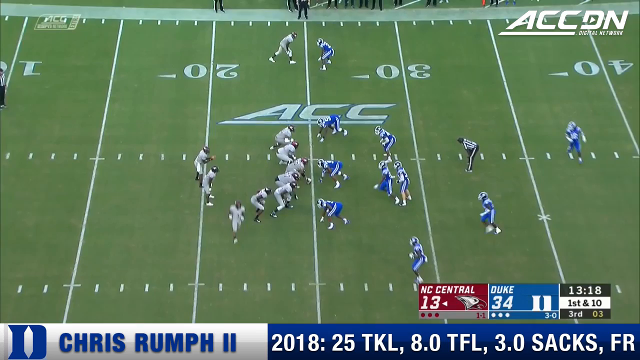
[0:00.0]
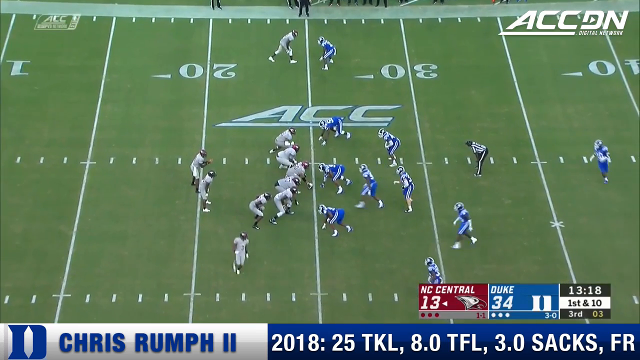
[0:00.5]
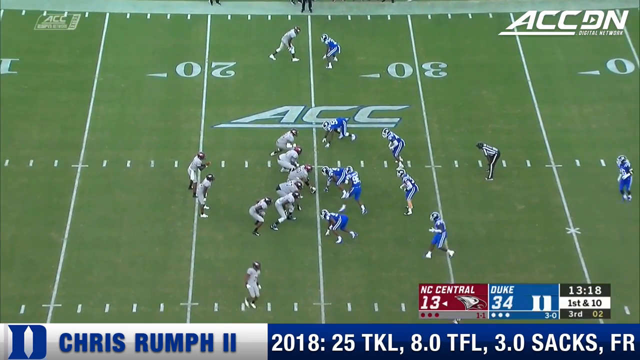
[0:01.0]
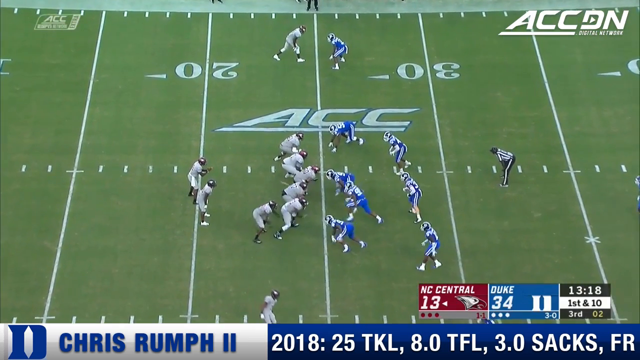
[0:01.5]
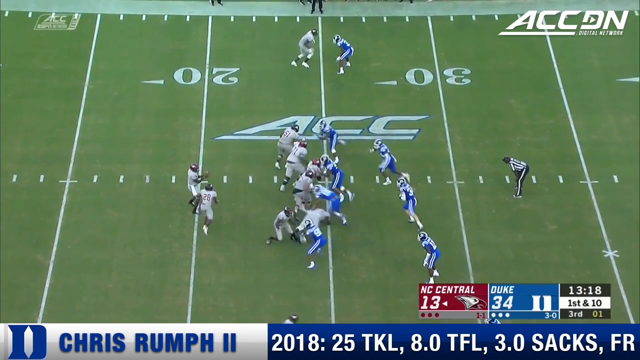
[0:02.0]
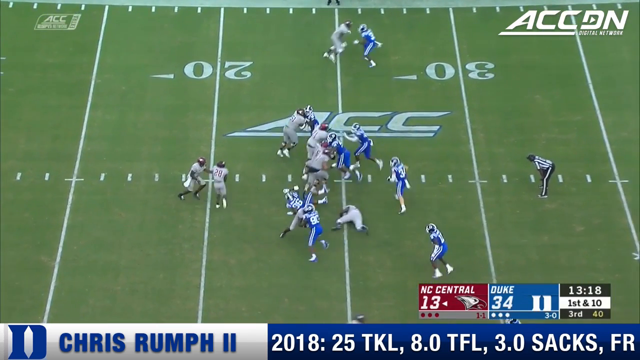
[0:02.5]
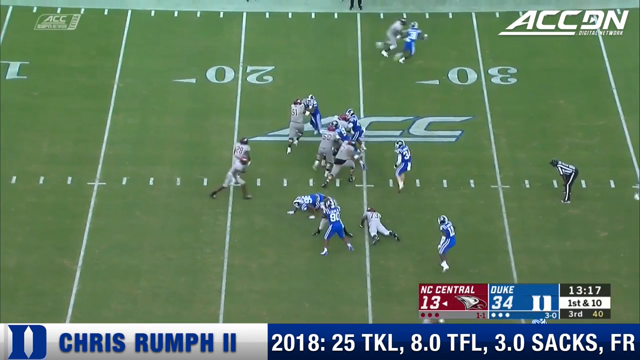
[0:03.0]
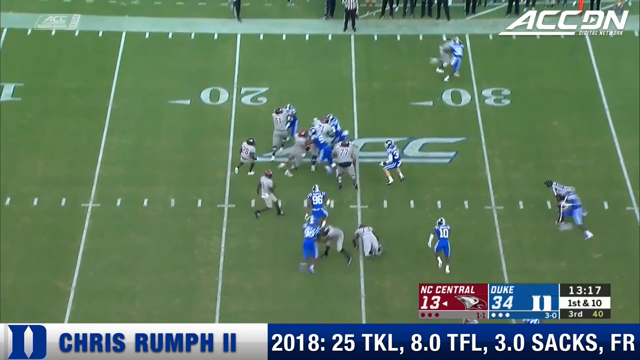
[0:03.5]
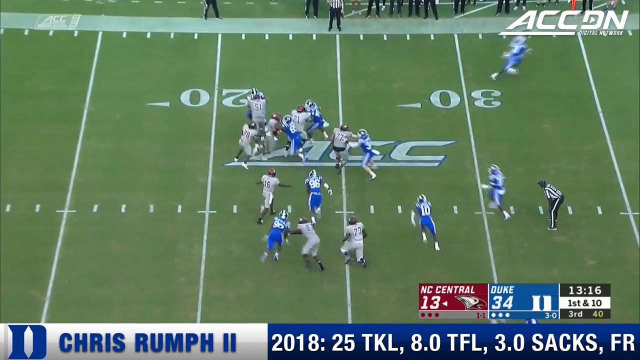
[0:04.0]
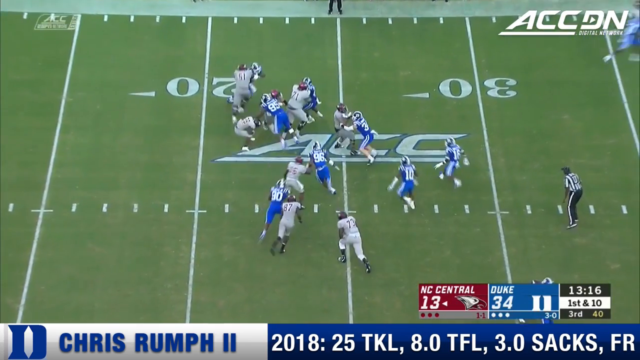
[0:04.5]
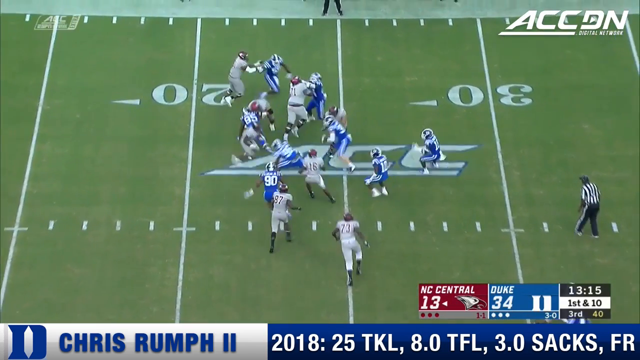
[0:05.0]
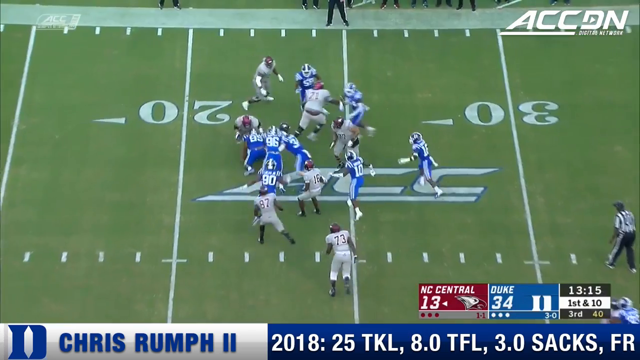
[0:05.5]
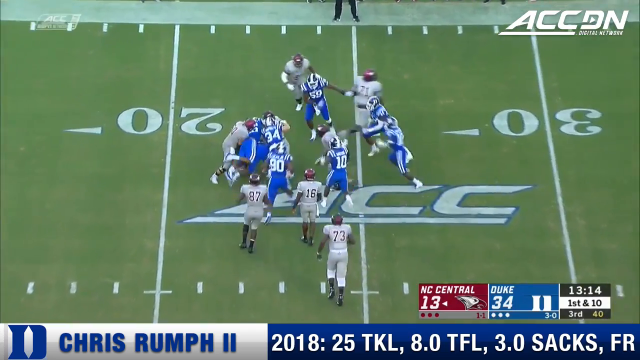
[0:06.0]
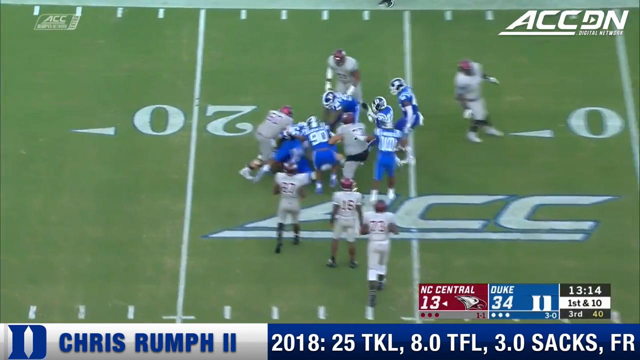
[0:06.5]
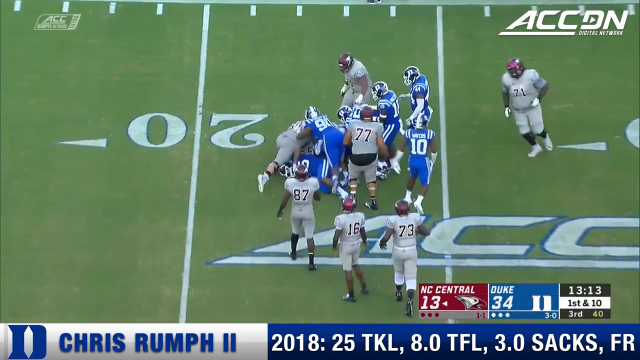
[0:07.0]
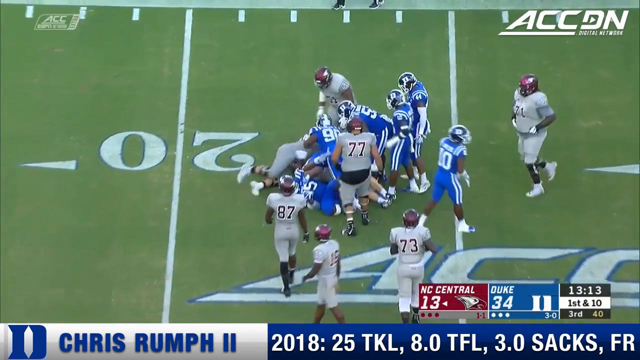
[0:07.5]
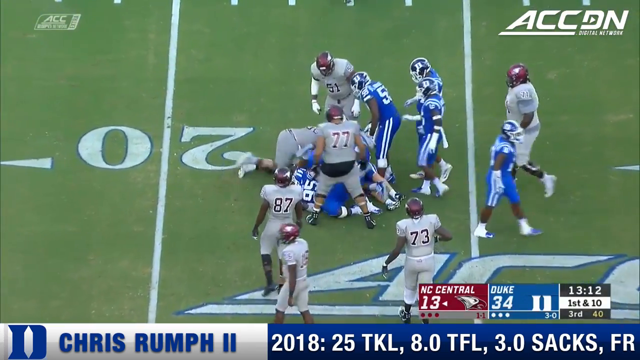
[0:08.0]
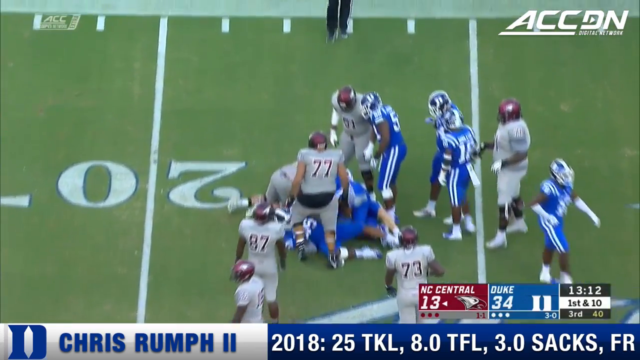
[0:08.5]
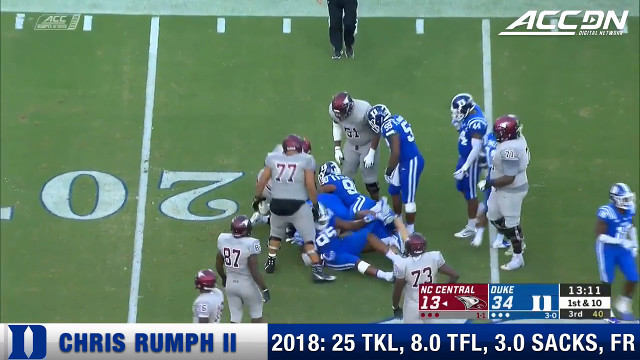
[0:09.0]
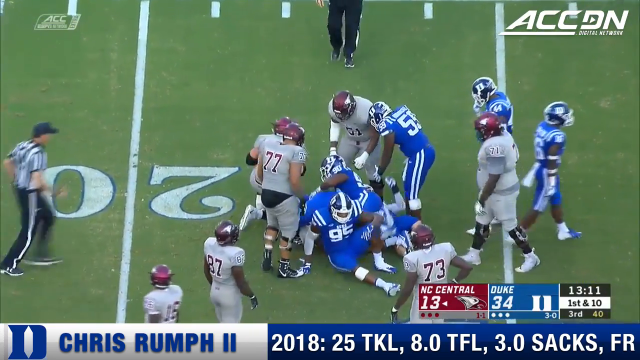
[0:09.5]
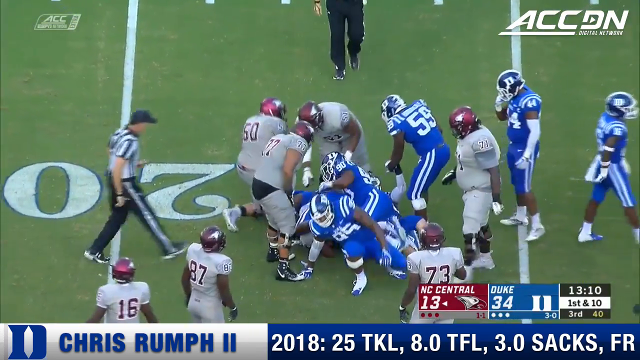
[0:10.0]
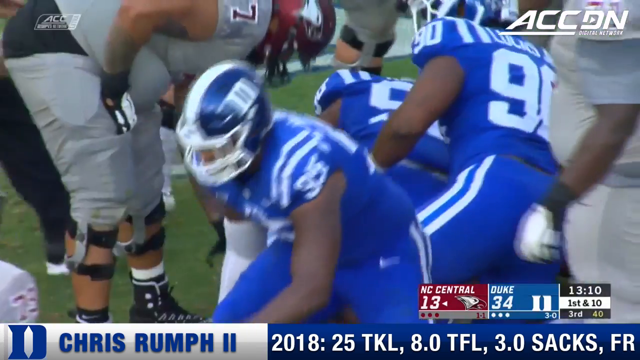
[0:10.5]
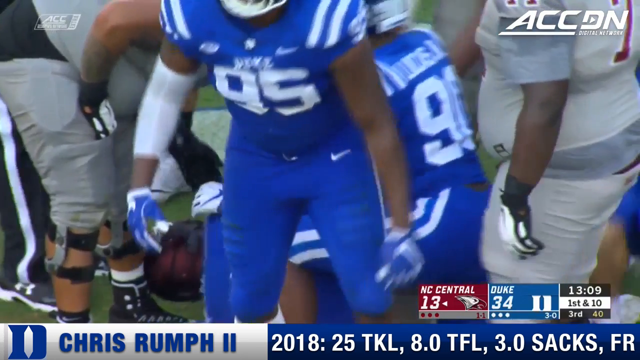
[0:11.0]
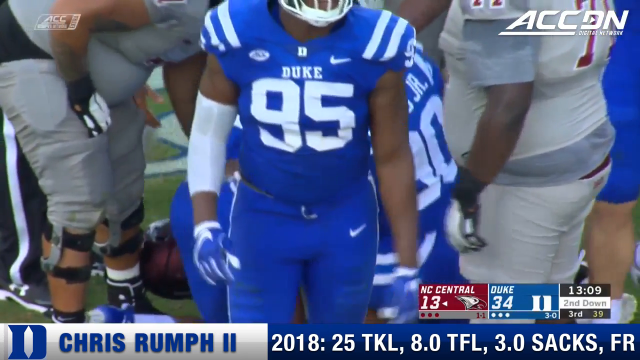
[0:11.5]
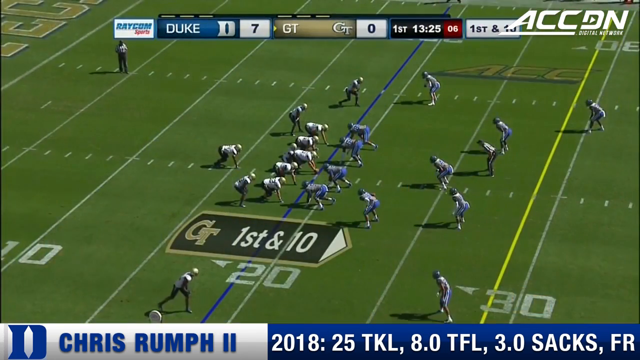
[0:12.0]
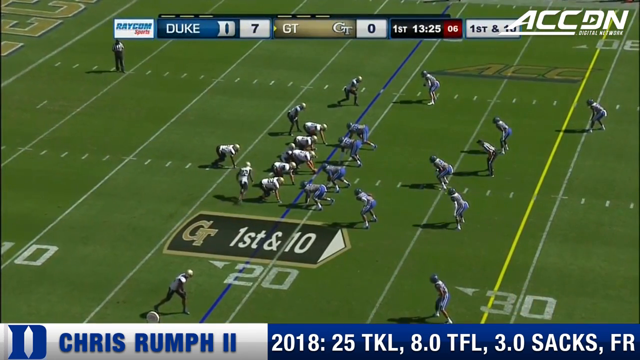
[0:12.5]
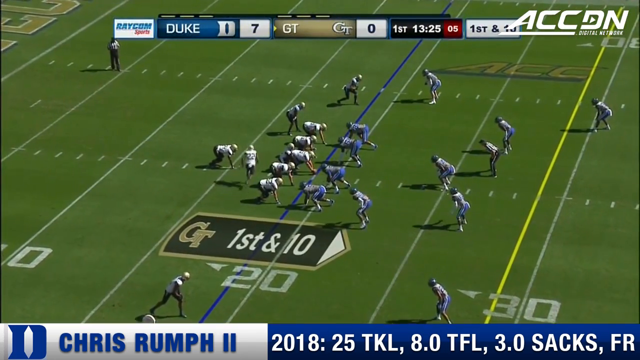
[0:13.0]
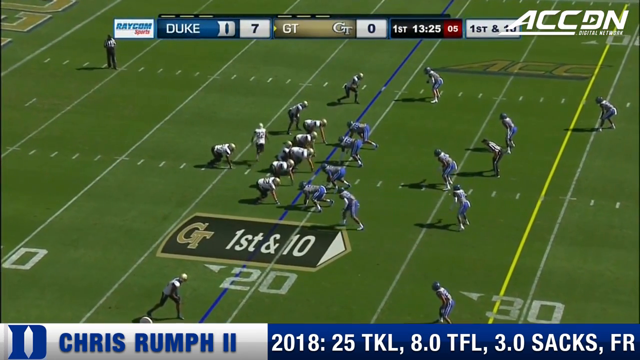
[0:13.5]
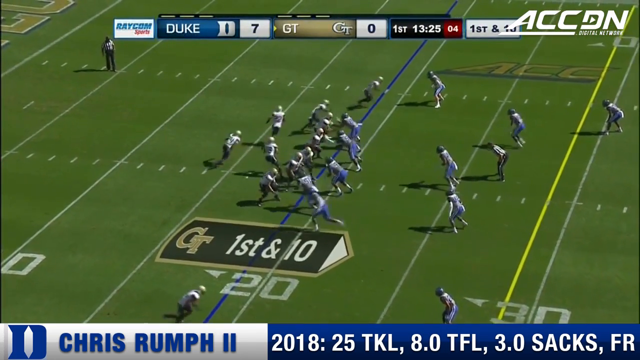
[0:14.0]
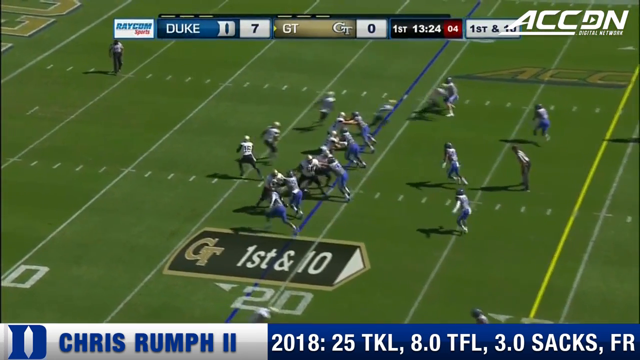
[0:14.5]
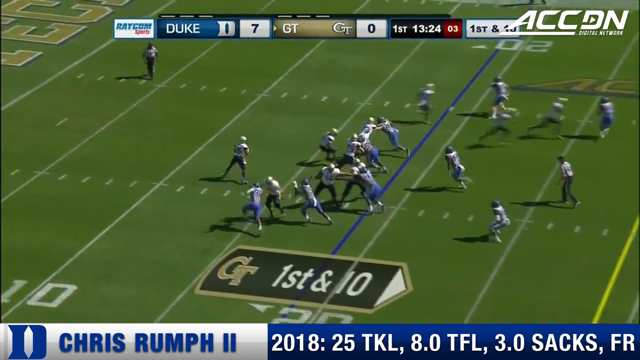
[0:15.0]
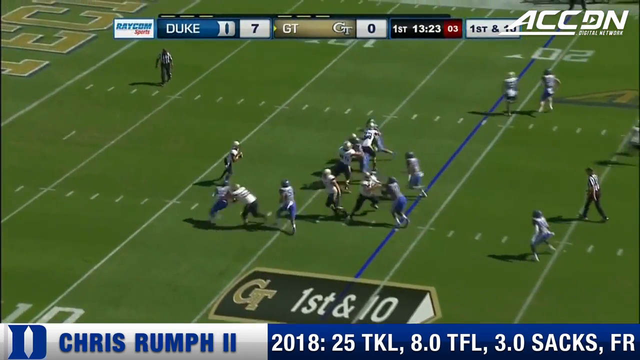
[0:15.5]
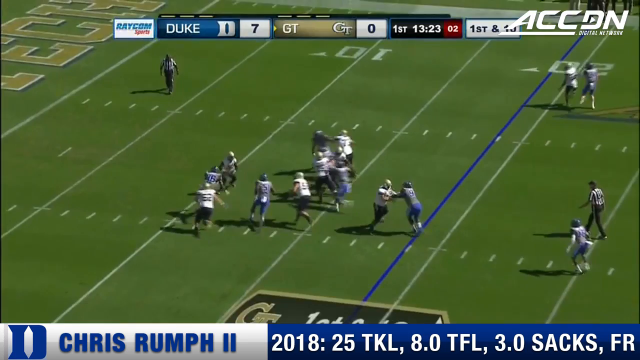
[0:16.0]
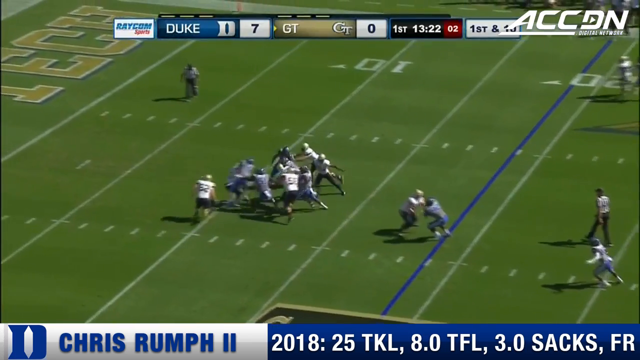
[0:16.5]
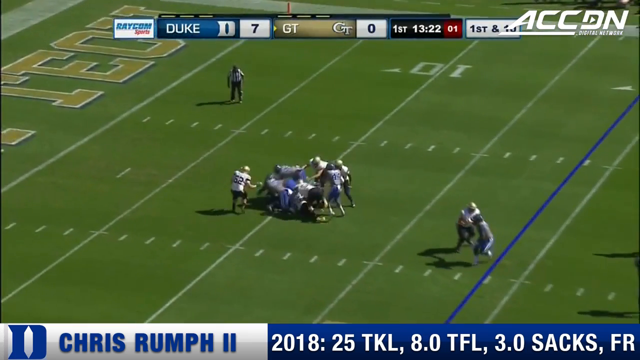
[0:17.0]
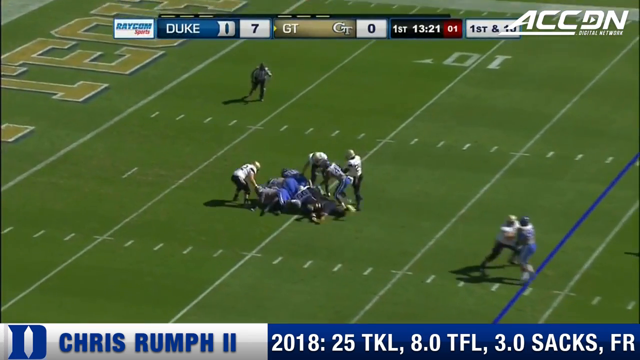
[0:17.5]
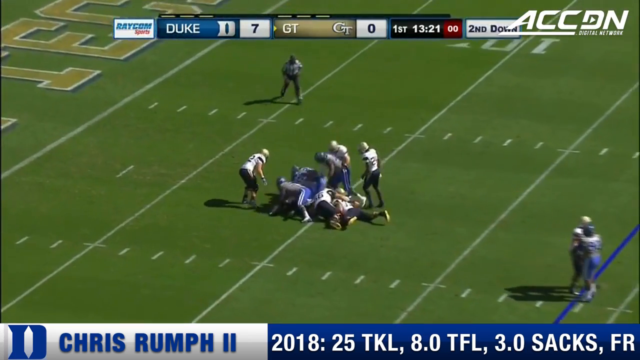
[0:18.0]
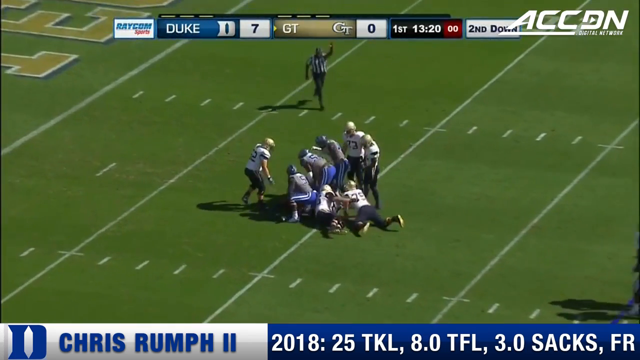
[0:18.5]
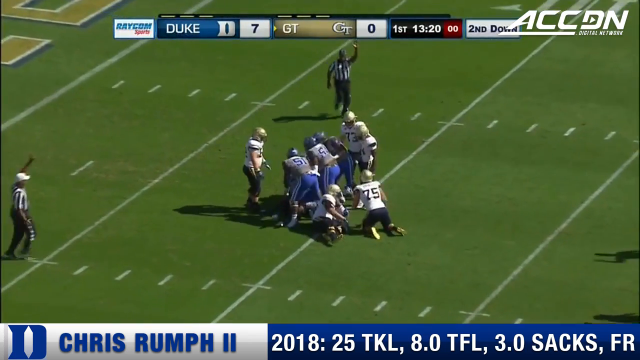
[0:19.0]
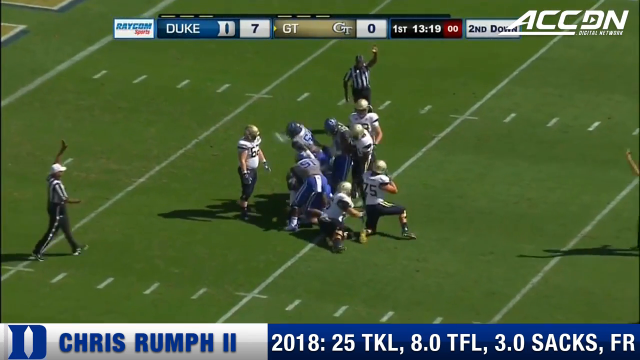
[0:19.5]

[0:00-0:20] Two football teams line up at the line of scrimmage on a football field. A chyron shows NC Central with a score of 13 and Duke with a score of 34, first and 10, in the third period. One team wears colors that are kind of white and reddish with red helmets, a white, gray type of look; the other team wears blue and white. The gray team snaps the ball to their quarterback, who hands it to the running back. The running back runs along the line of scrimmage and tries to get into a gap, but is stopped and piled on by the blue and white team. In the top right corner is a white logo that says "ACCDN". The camera zooms in on the pile of players, then cuts to a closer, ground-level shot of the players getting up and walking away. The video then transitions to what seems to be Duke and GT lining up at the line of scrimmage.